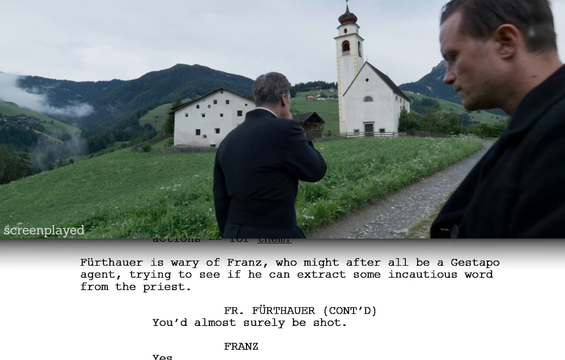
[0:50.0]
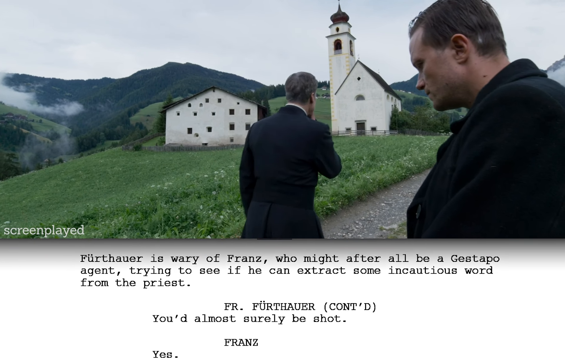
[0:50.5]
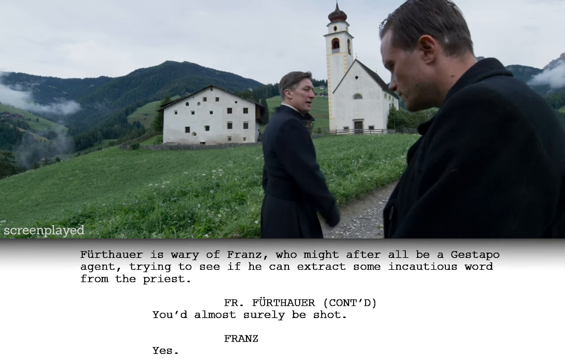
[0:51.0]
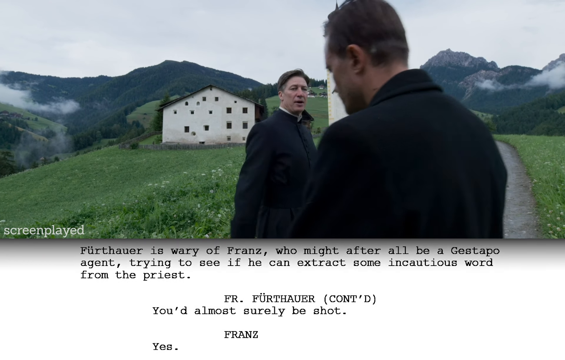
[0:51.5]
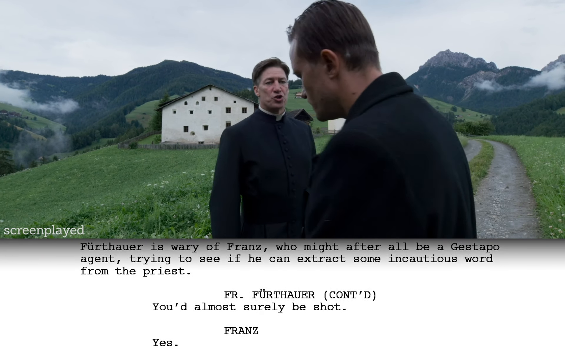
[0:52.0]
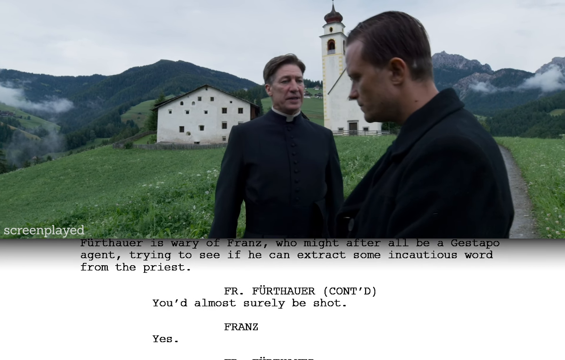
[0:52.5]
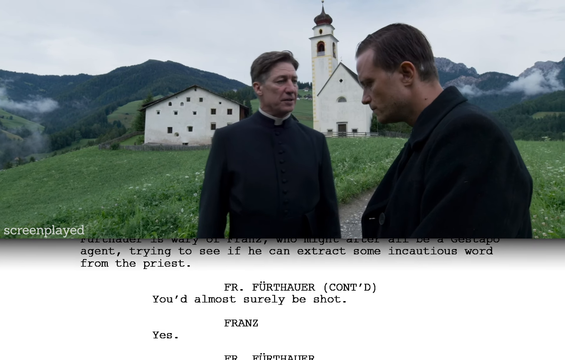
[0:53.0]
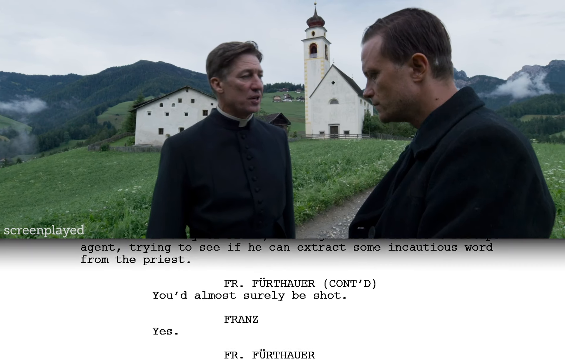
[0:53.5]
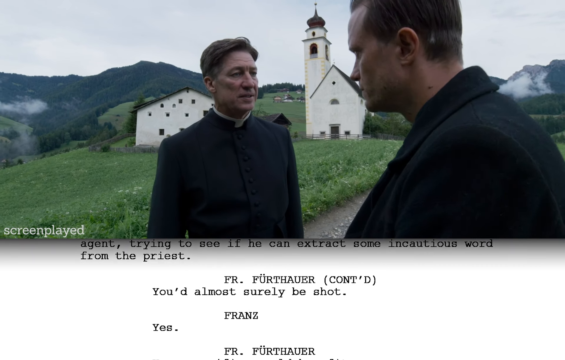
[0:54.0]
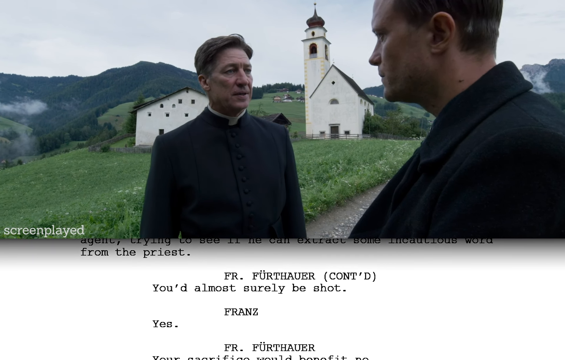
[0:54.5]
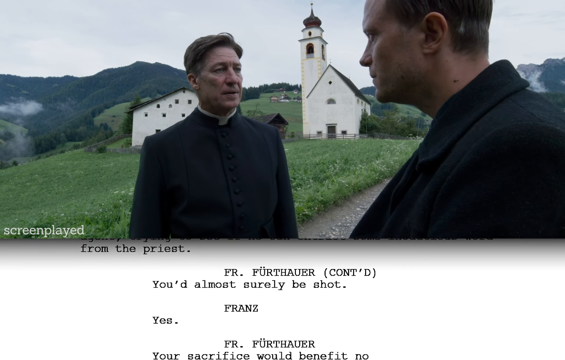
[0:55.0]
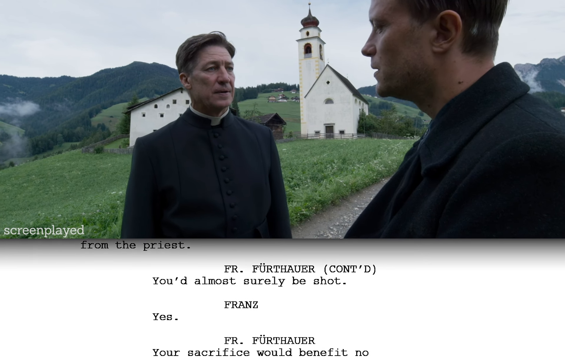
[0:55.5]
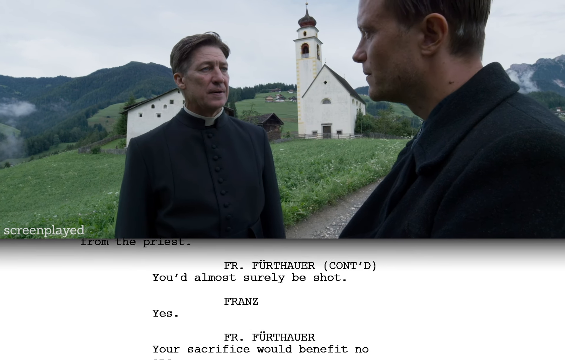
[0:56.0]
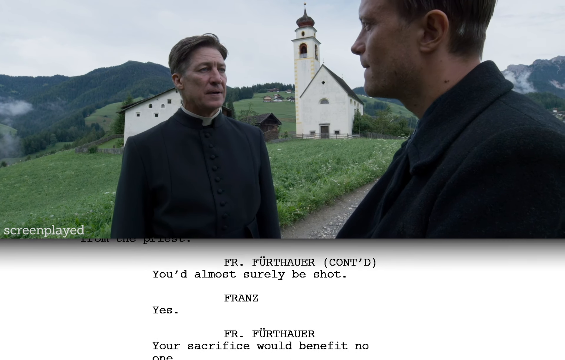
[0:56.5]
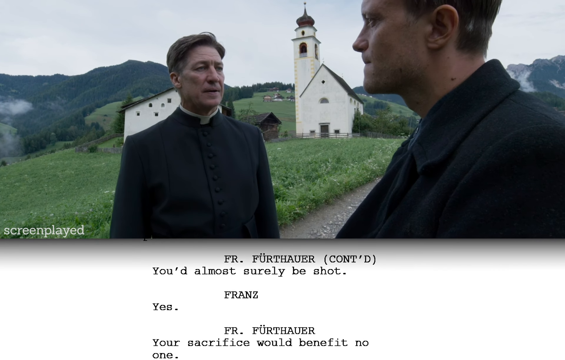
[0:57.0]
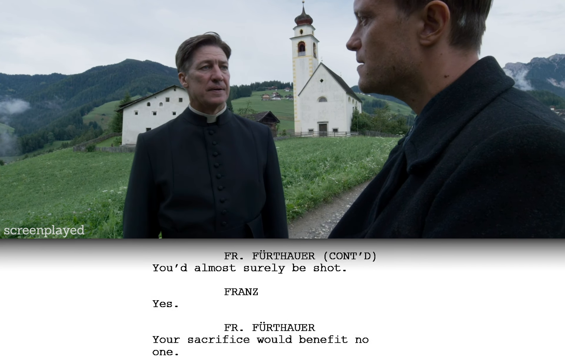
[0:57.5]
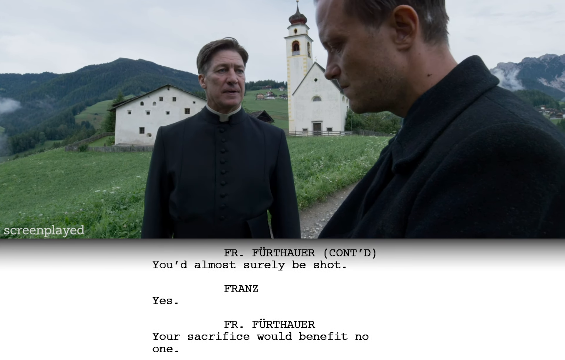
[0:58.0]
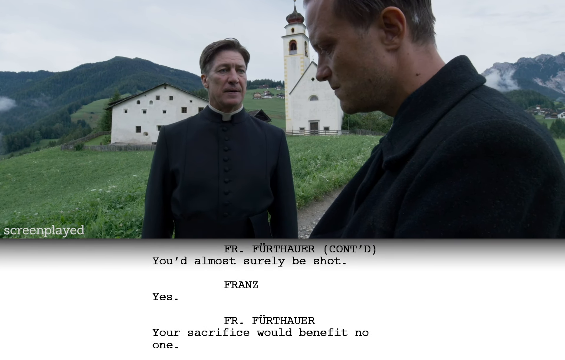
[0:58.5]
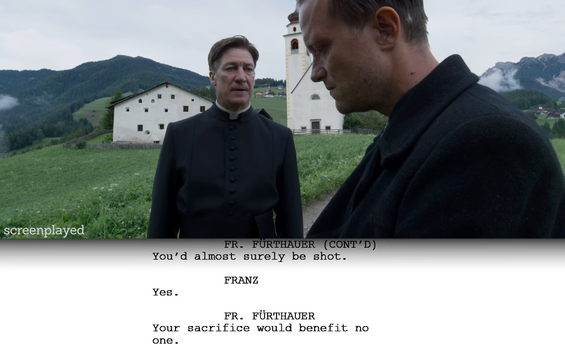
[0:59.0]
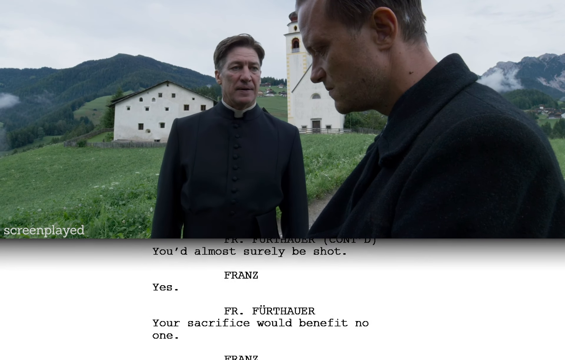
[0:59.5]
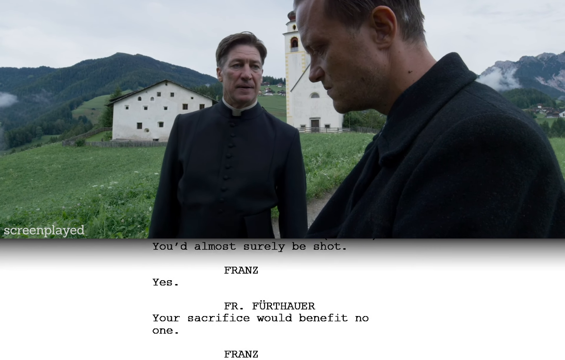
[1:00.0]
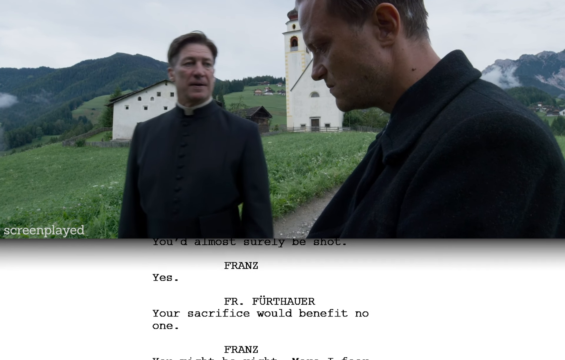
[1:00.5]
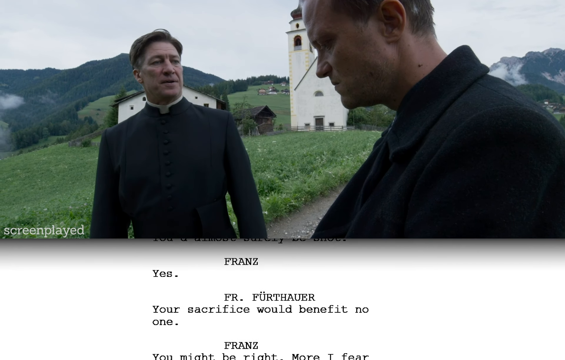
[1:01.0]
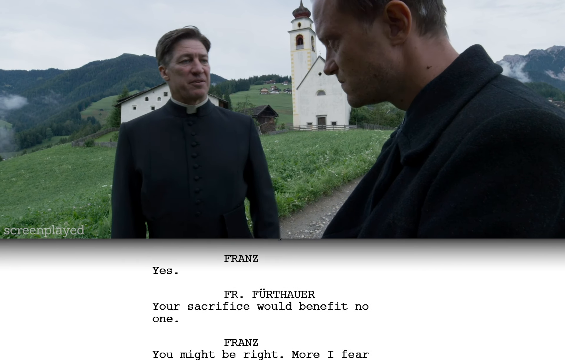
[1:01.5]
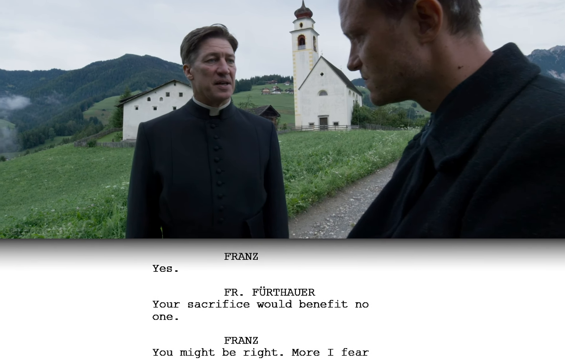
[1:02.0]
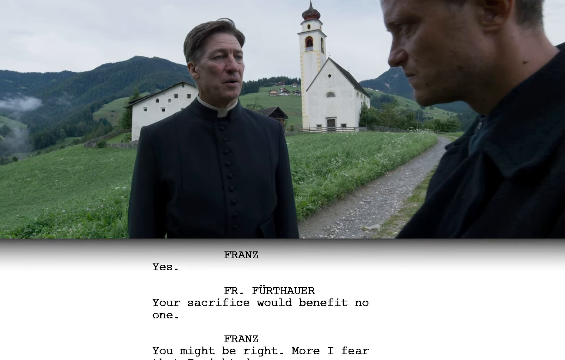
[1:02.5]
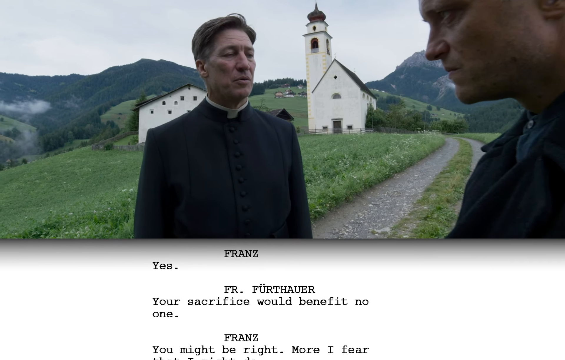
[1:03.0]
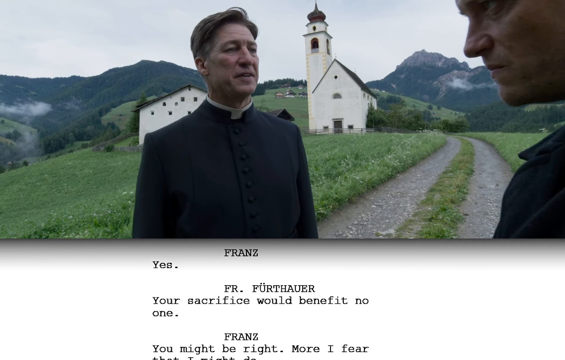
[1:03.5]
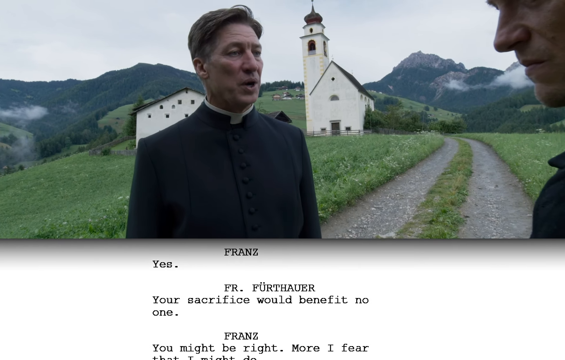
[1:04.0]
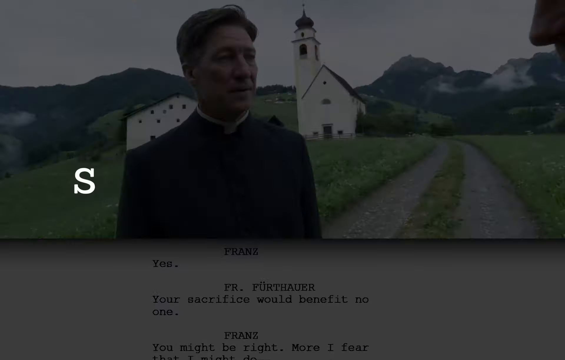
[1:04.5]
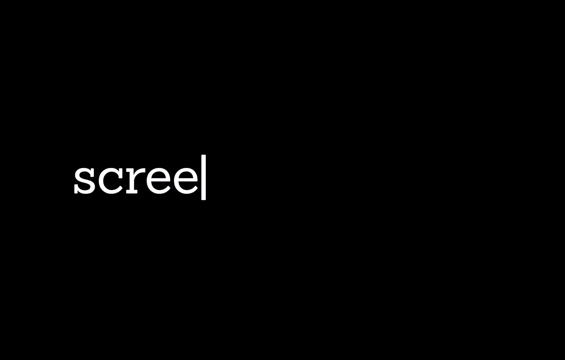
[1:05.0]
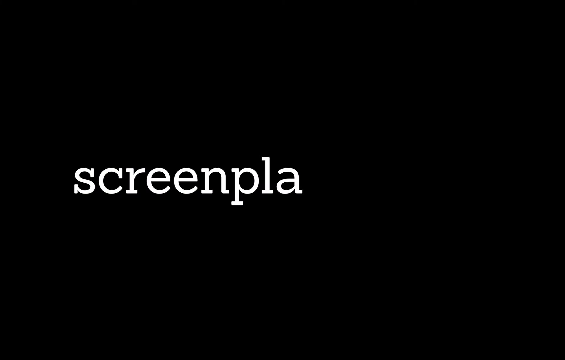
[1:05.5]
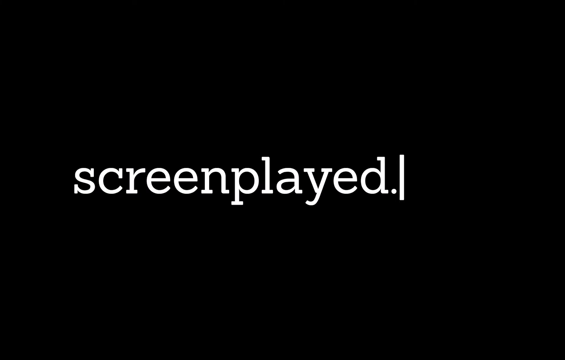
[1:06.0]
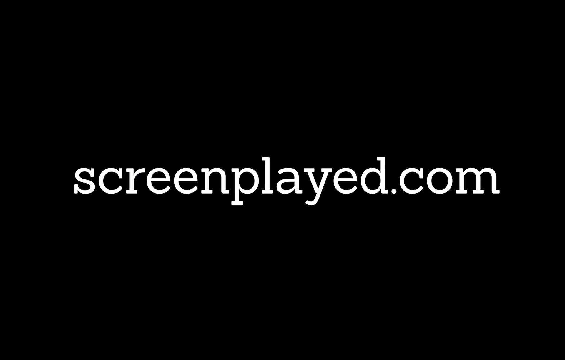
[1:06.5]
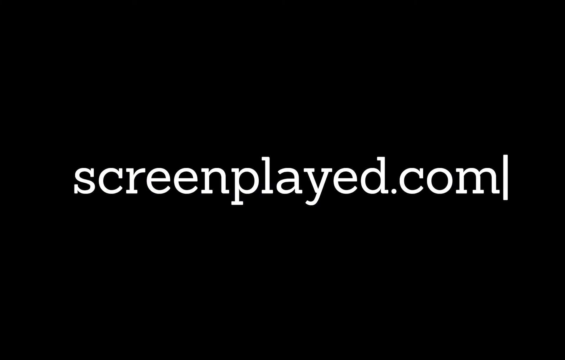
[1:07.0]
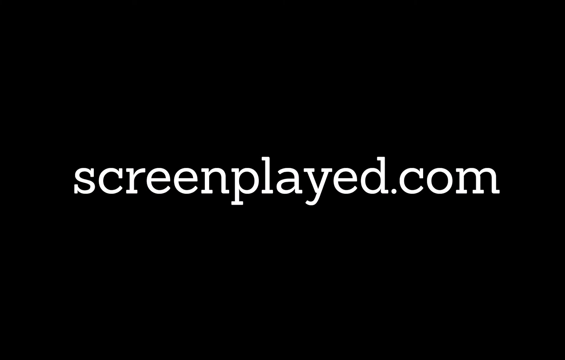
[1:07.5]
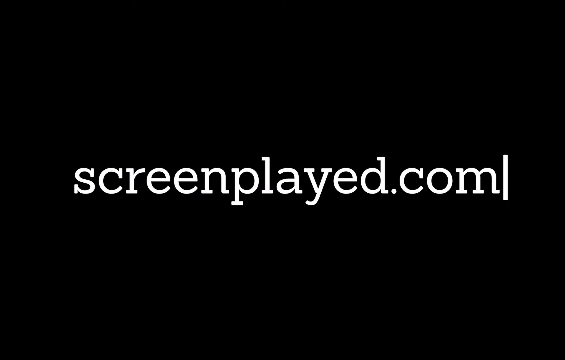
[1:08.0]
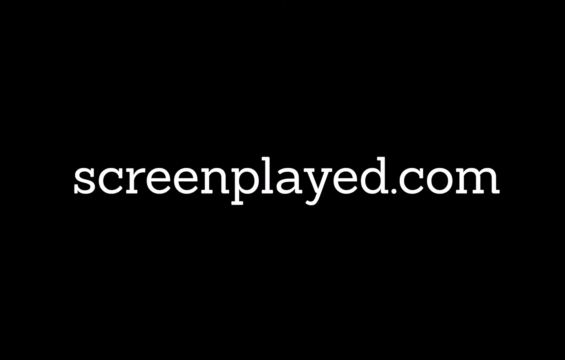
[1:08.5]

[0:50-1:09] The pastor looks like he is walking away from the other man, but he makes a U-turn and comes right back. He starts to look upset, and the man on the right-hand side starts to look disappointed. The text at the bottom of the screen reads: "France, yes, your sacrifice would benefit no one." The video cuts off before the rest of the story, and a black screen appears with the words "screenplayed.com" on it. Judging by the way people are dressed and the text at the bottom, the story appears to be church-related.